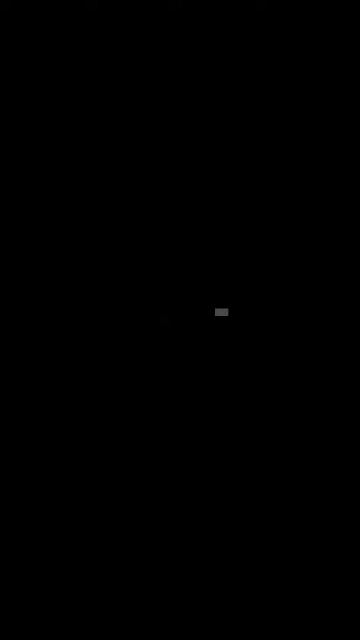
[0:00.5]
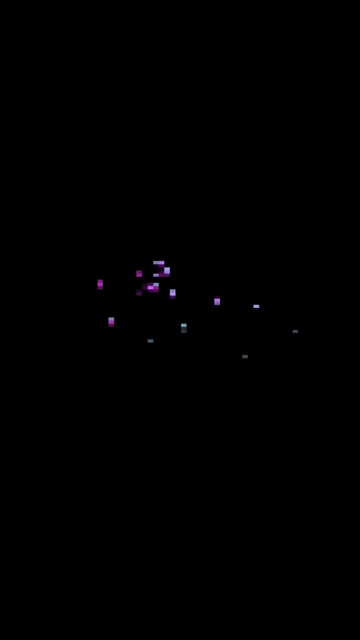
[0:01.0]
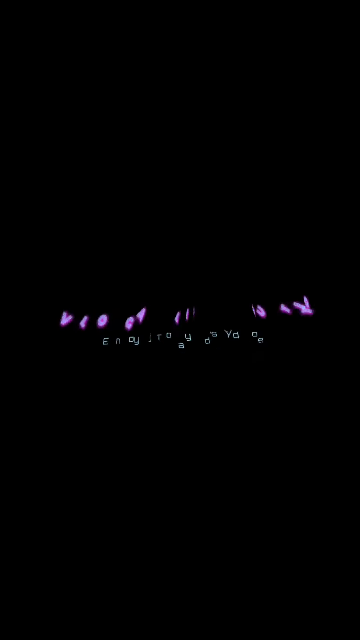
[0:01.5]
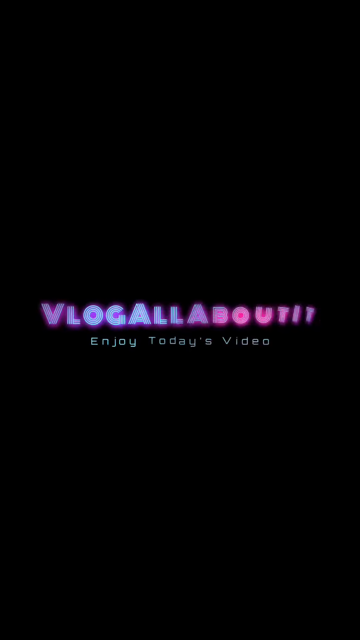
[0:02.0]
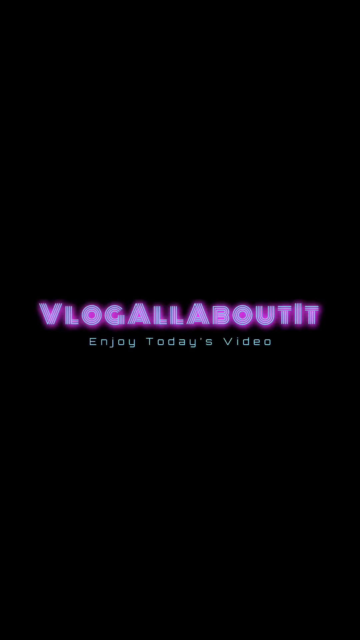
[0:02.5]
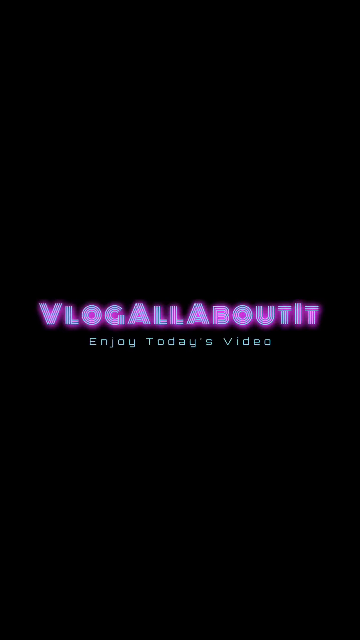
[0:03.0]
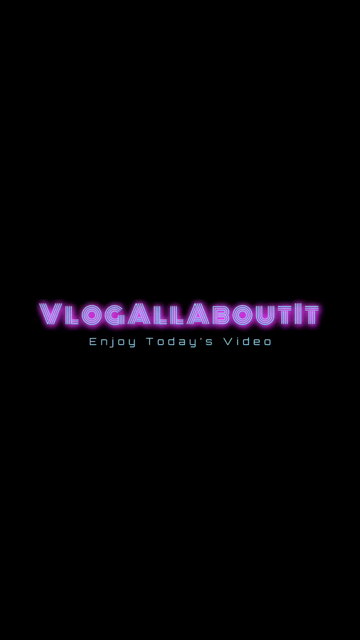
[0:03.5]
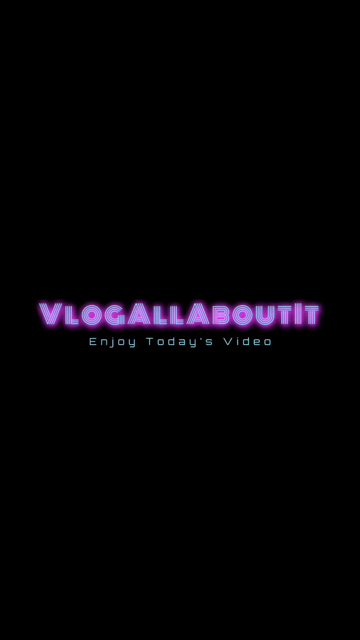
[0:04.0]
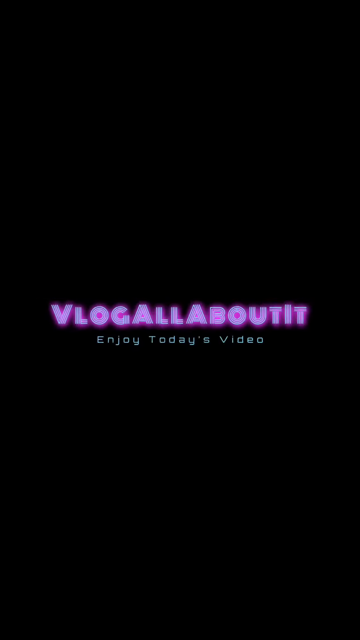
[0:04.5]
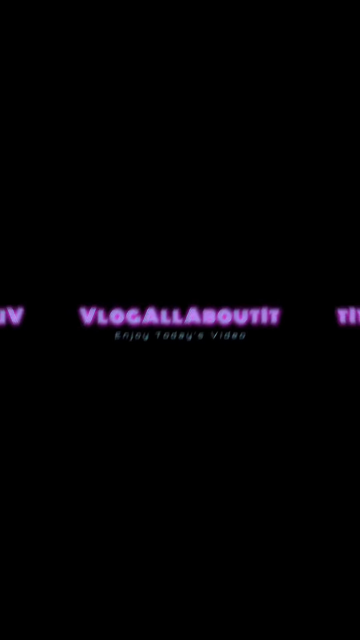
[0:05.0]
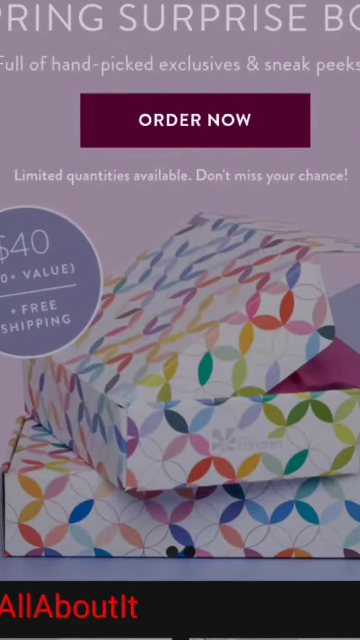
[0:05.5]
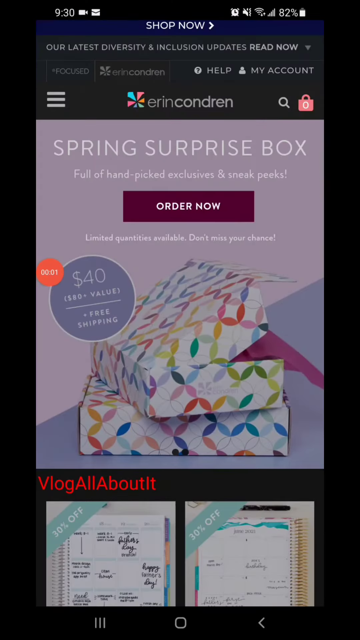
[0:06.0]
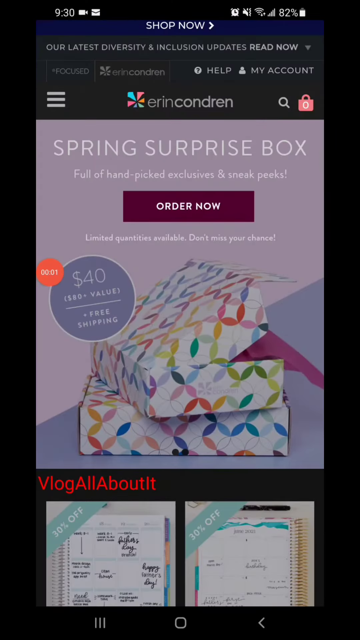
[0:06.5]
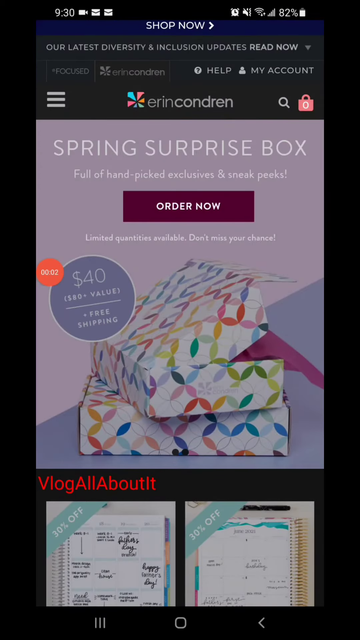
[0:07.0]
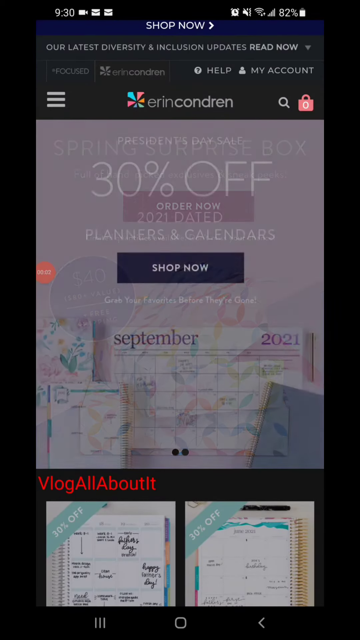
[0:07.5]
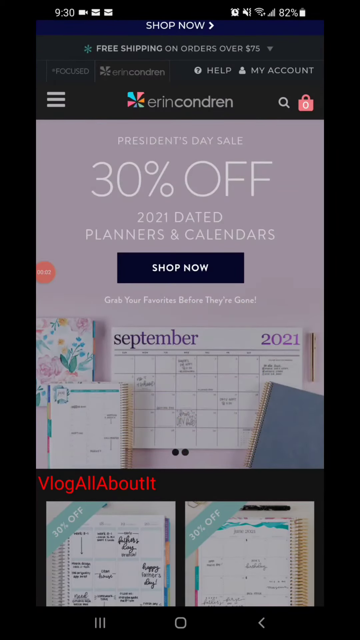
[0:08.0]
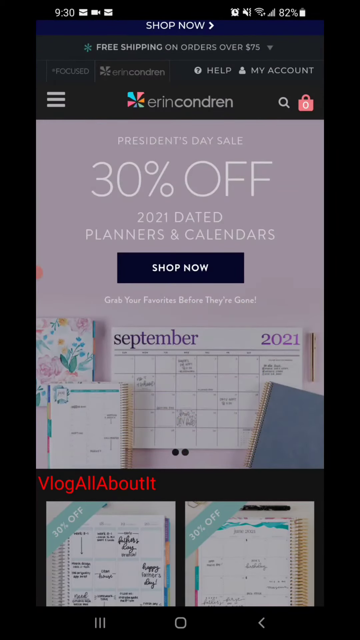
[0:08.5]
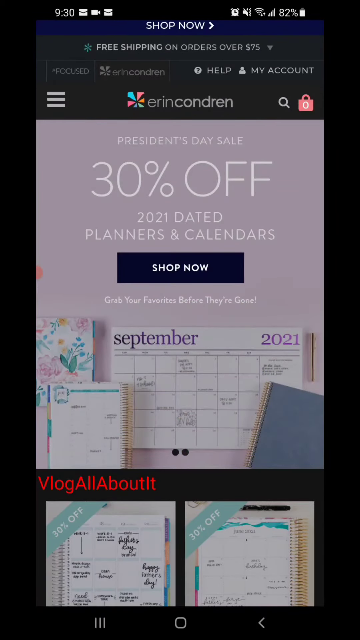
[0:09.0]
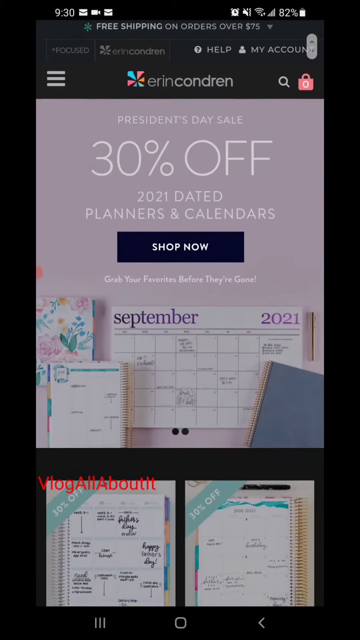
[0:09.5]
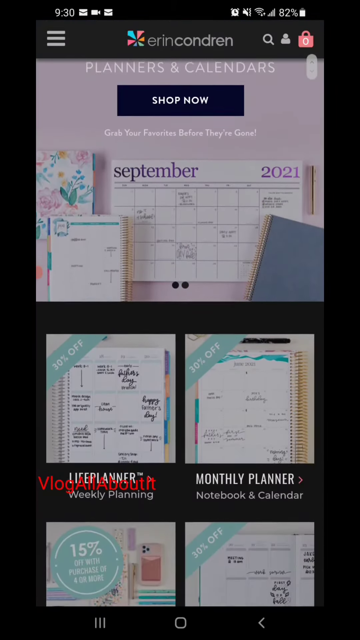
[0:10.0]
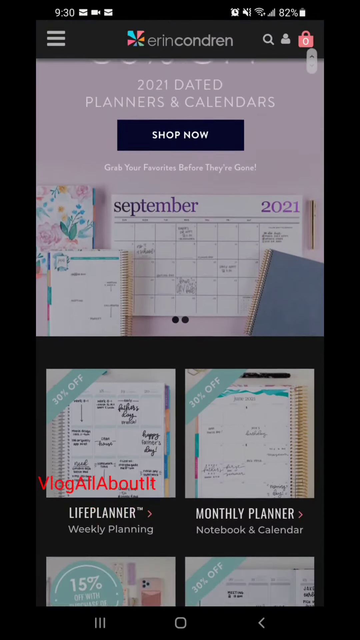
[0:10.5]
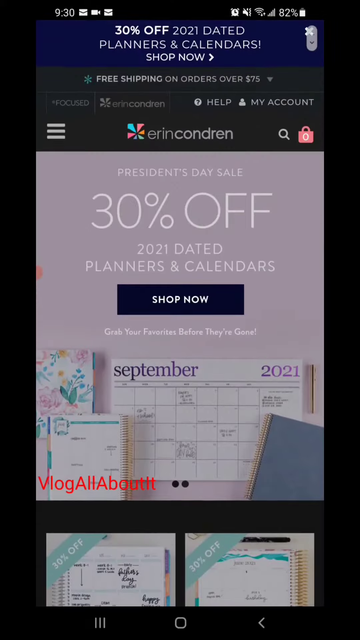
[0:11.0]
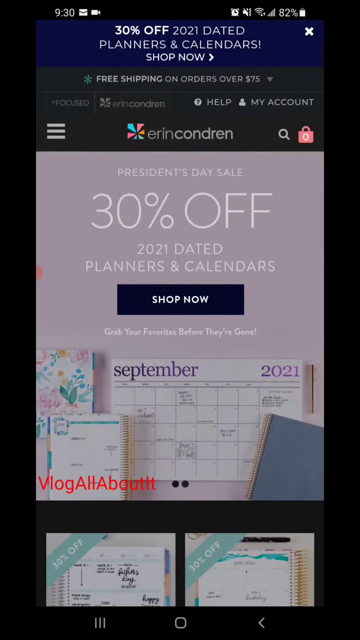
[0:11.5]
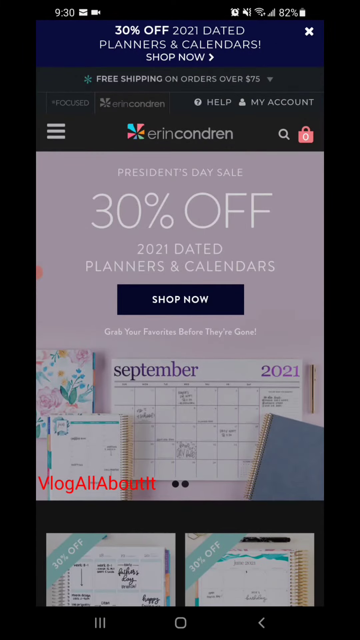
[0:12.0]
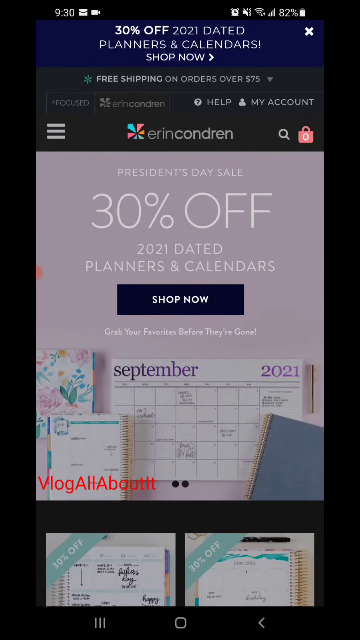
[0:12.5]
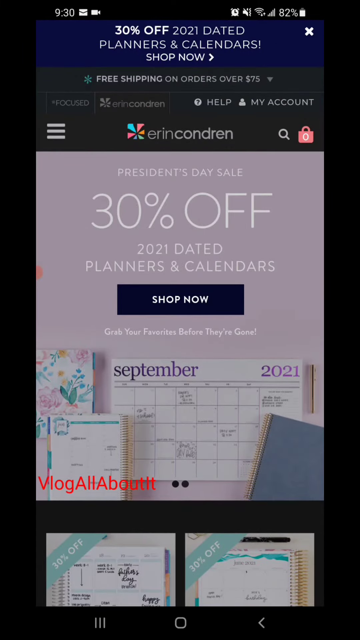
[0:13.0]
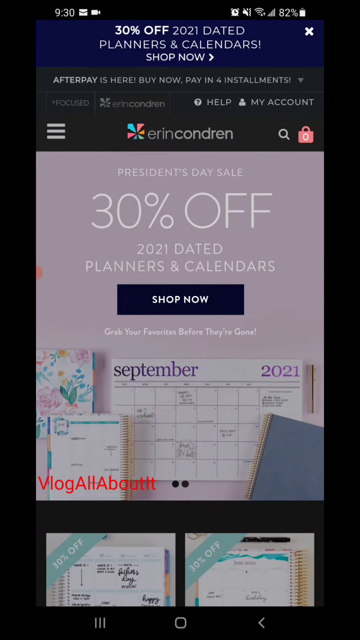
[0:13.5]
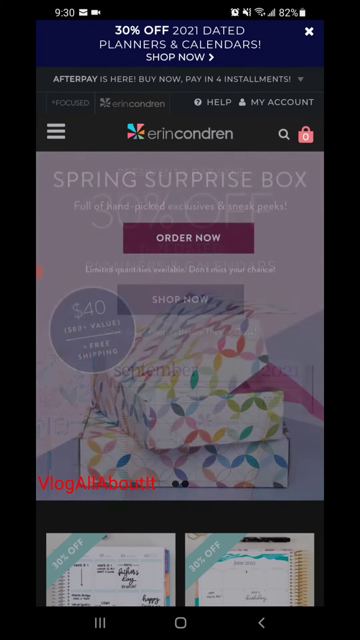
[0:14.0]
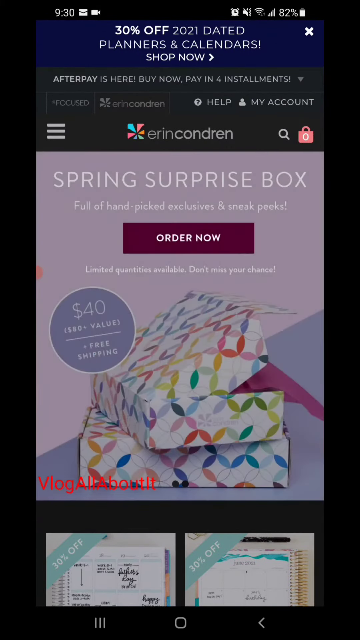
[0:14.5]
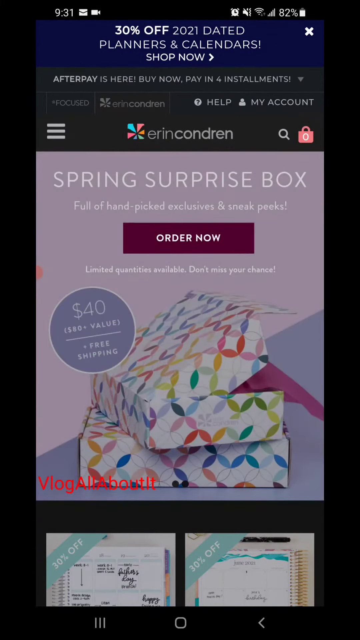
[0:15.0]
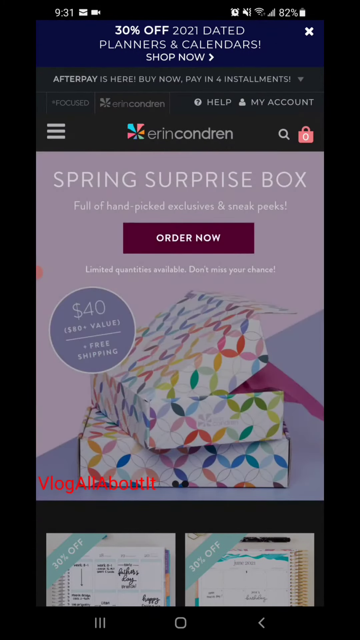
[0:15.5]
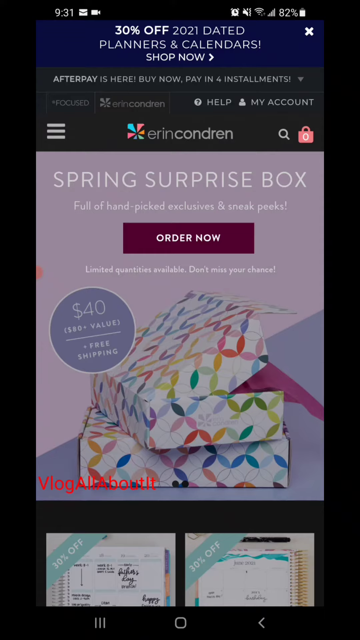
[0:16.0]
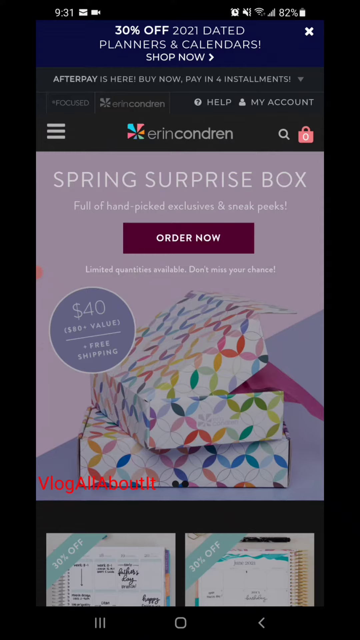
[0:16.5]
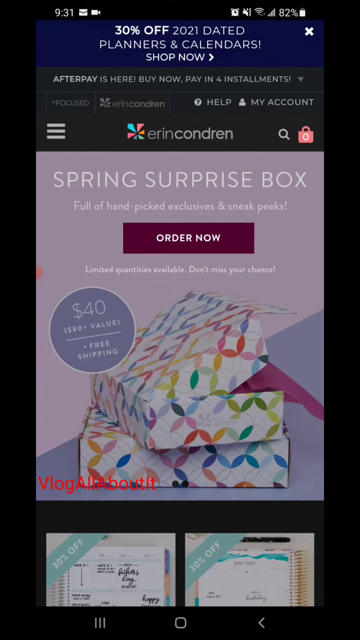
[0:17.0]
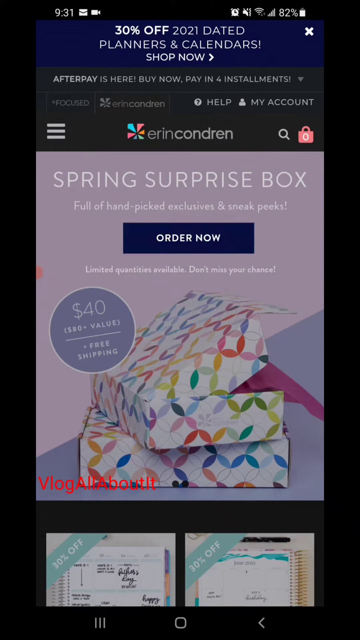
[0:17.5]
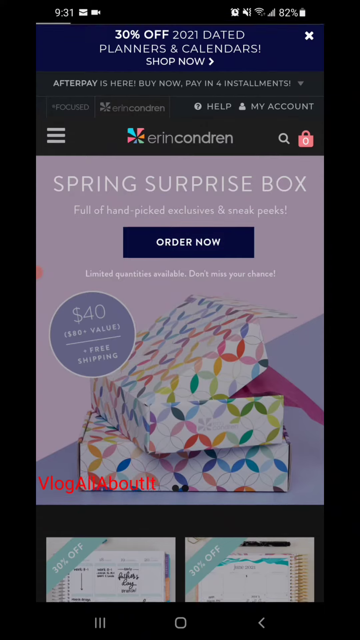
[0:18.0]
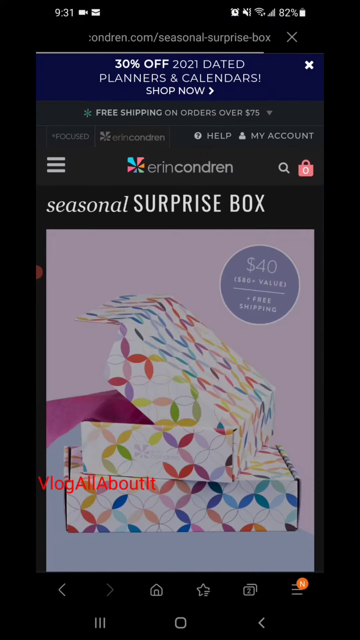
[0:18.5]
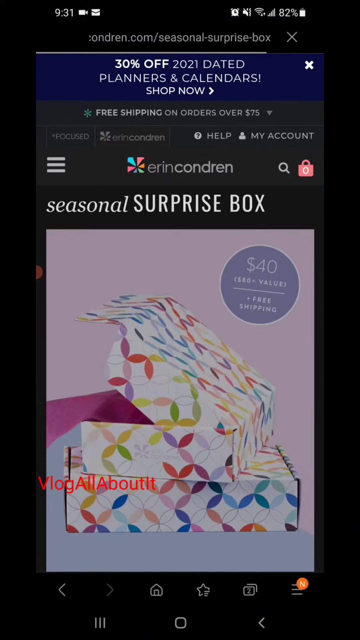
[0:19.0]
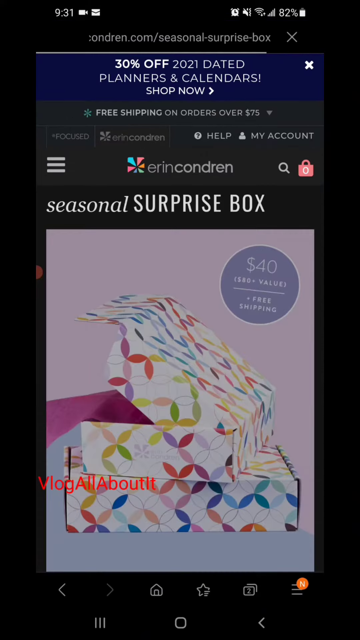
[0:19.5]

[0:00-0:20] The video opens on a blank screen with the text "vlog all about it." It then moves to an app for Aaron Conrad, where there appears to be a president sale, with the text "30% off 2021 dated planners and calendars shop now." The view scrolls up and down through different parts of the sale, showing Aaron Conrad boxes and different planners at 30% off, and the words "vlog all about it" appear. Different types of planners and boxes are shown: one bright, colorful box is on top of another box that is halfway open with paper coming out of it. There are a few pictures of planners with different things written on them; one seems to say "September 2021" along with some small lettering that cannot be made out. The planners are 2021 dated planners.